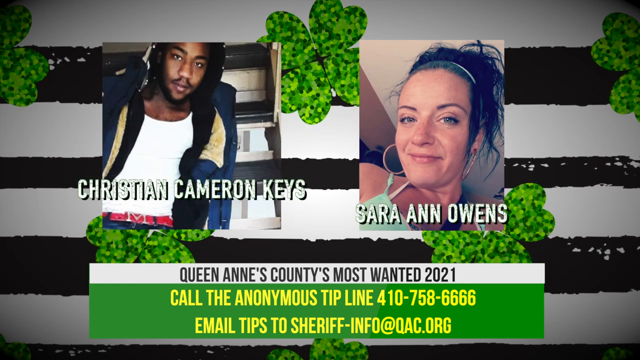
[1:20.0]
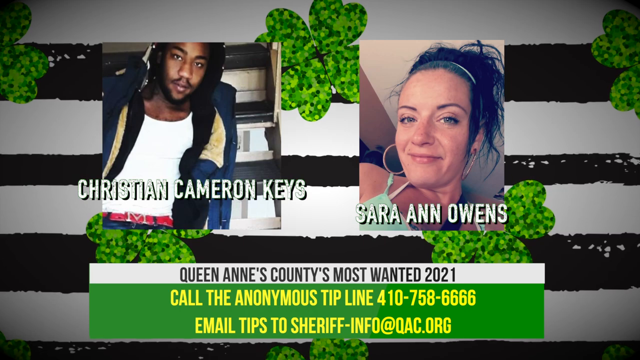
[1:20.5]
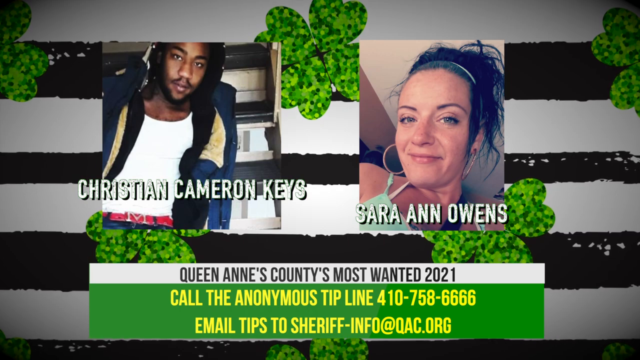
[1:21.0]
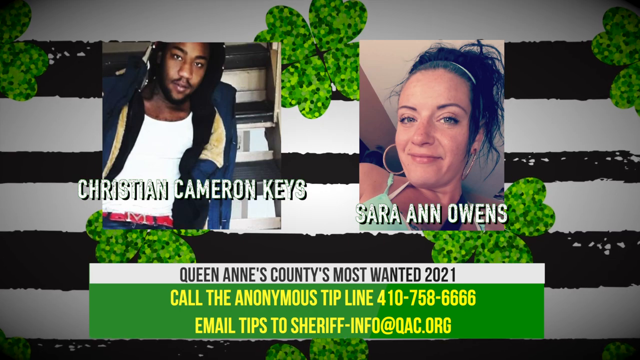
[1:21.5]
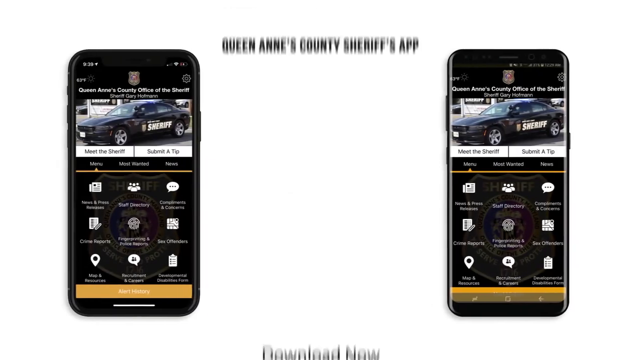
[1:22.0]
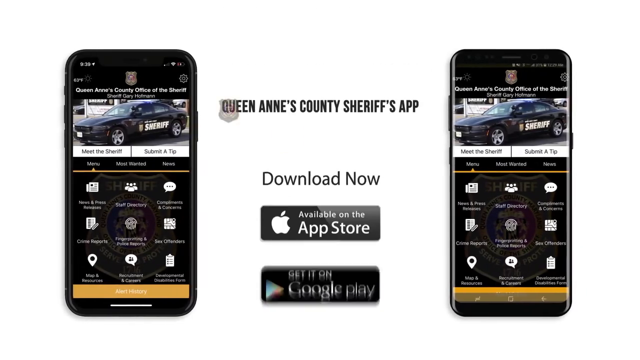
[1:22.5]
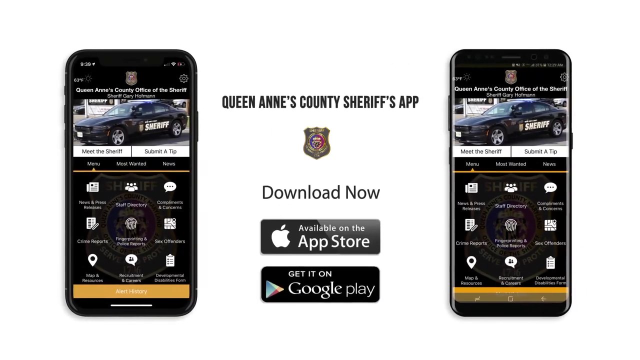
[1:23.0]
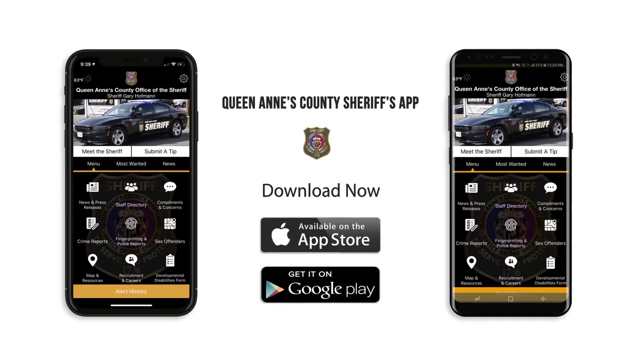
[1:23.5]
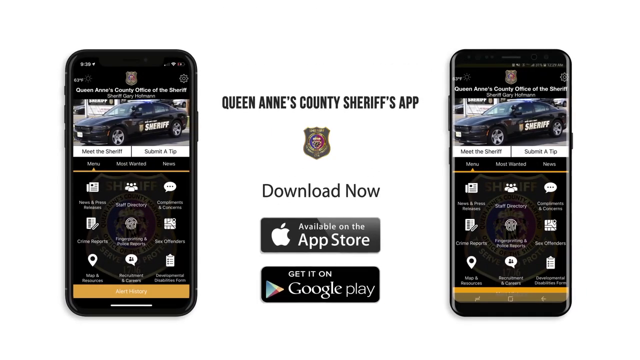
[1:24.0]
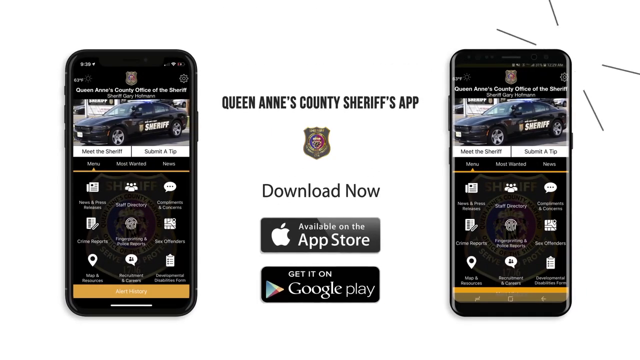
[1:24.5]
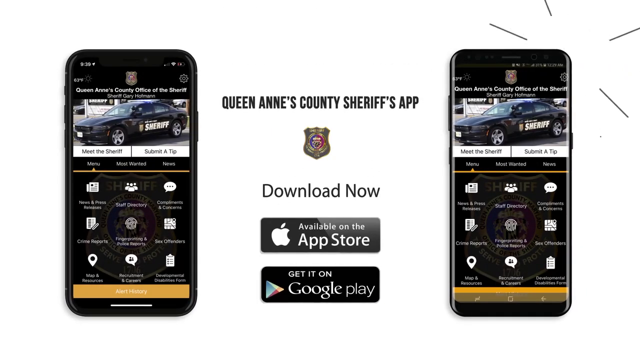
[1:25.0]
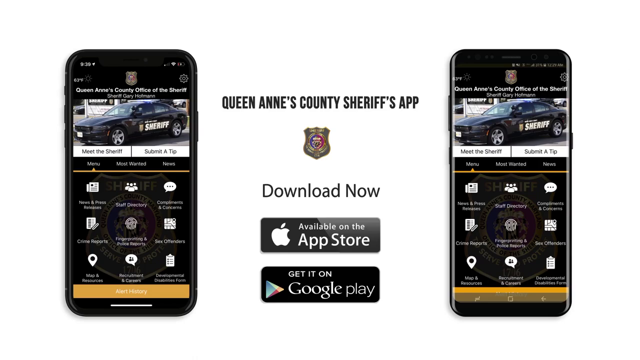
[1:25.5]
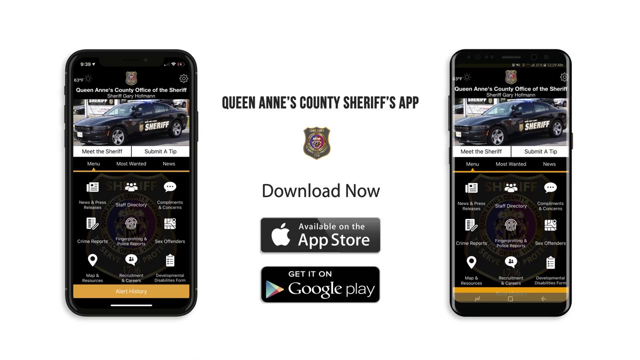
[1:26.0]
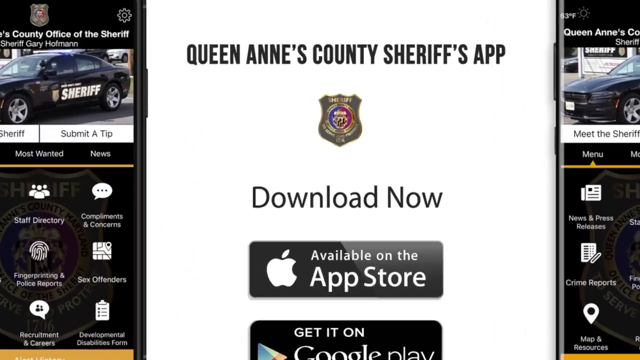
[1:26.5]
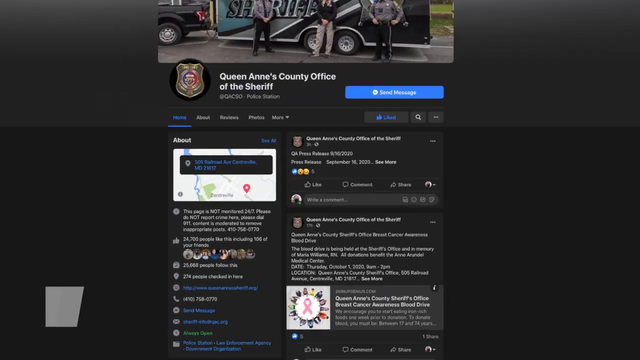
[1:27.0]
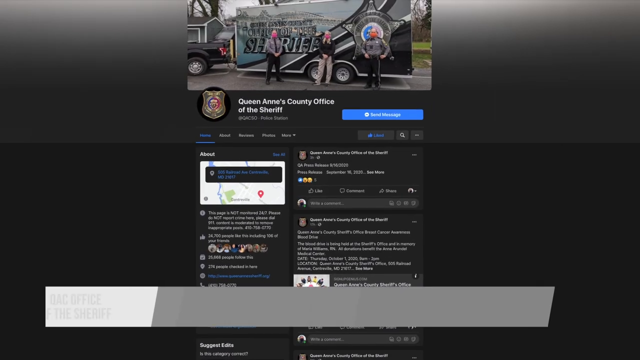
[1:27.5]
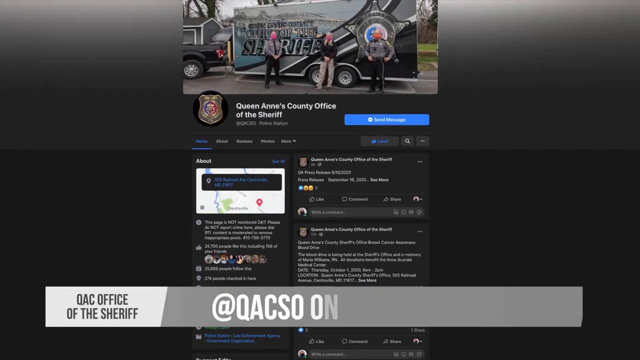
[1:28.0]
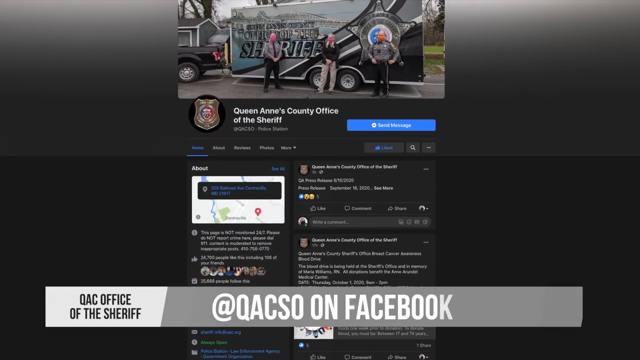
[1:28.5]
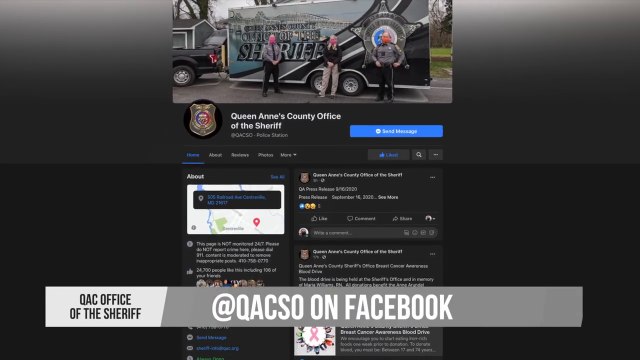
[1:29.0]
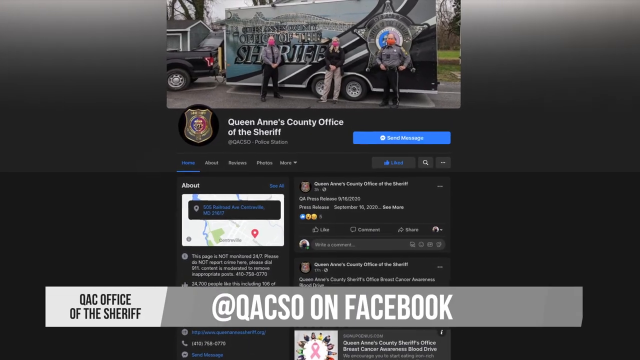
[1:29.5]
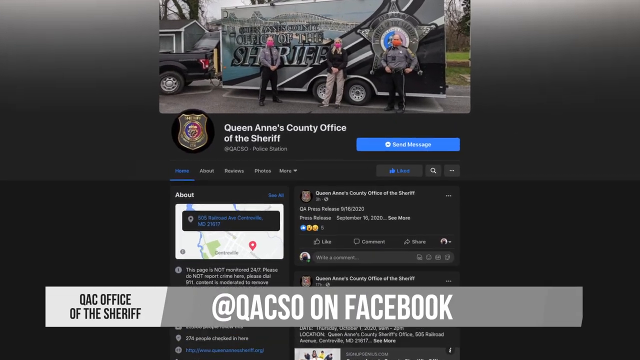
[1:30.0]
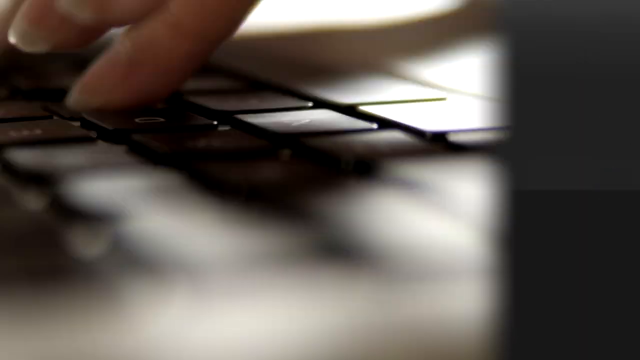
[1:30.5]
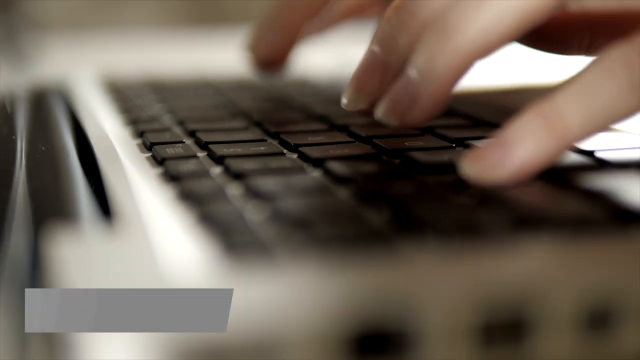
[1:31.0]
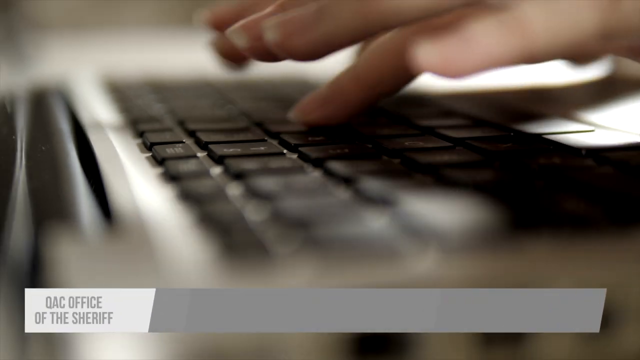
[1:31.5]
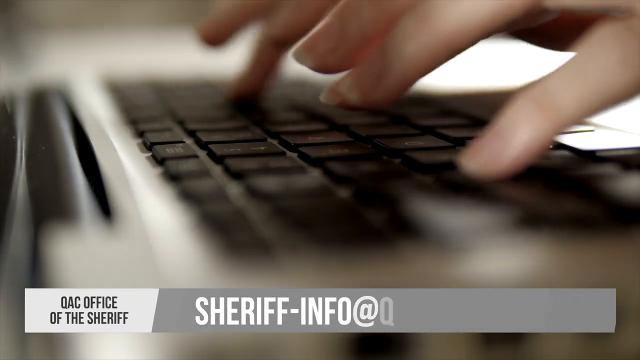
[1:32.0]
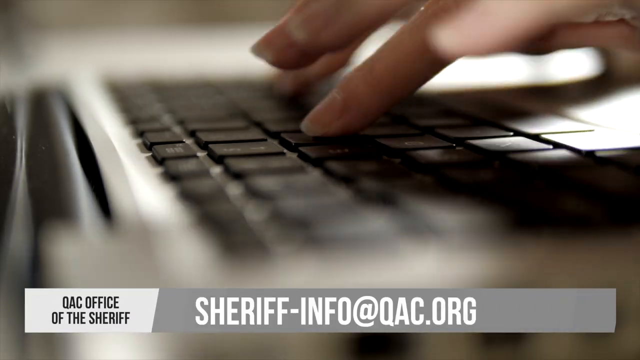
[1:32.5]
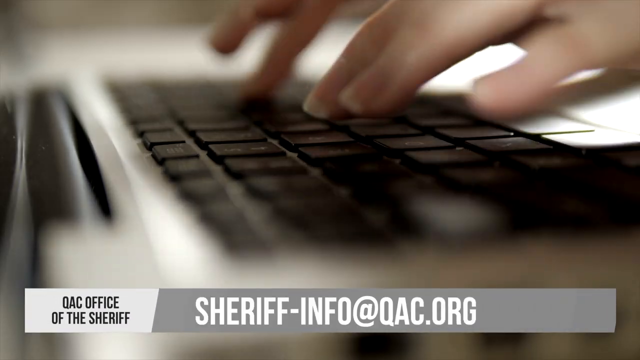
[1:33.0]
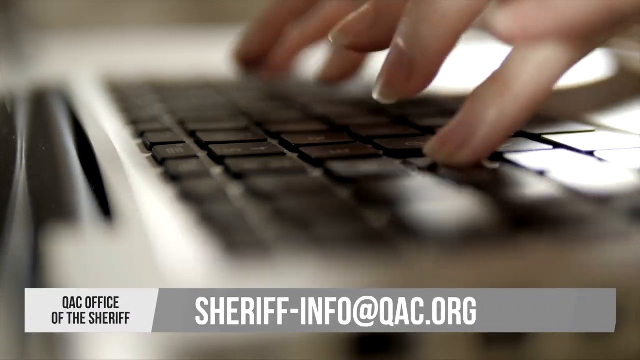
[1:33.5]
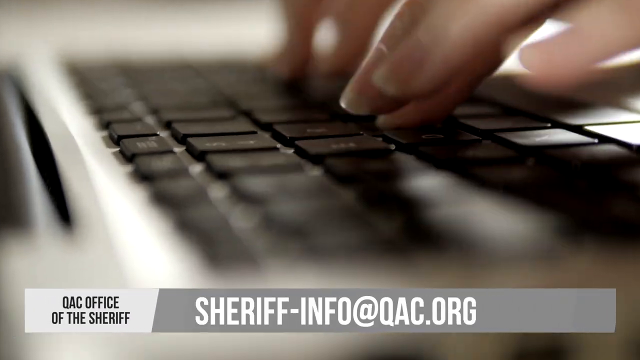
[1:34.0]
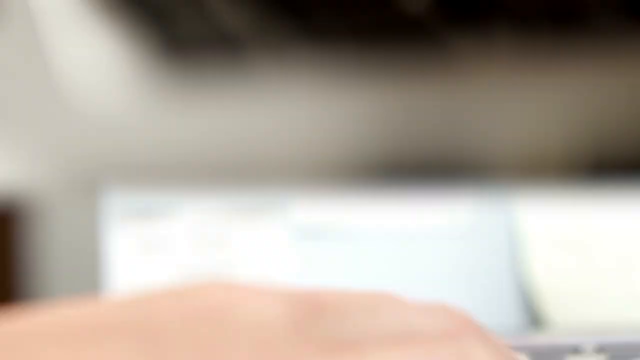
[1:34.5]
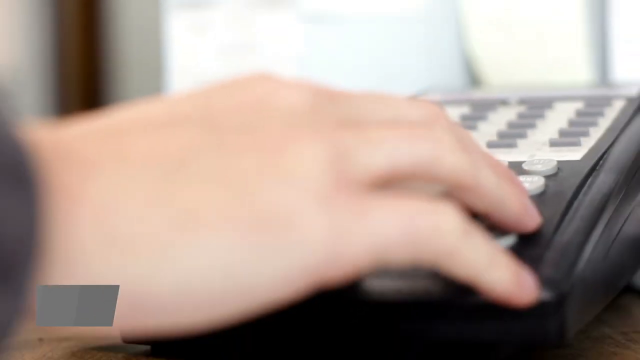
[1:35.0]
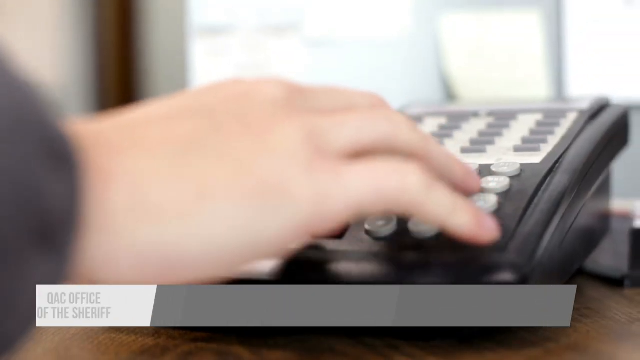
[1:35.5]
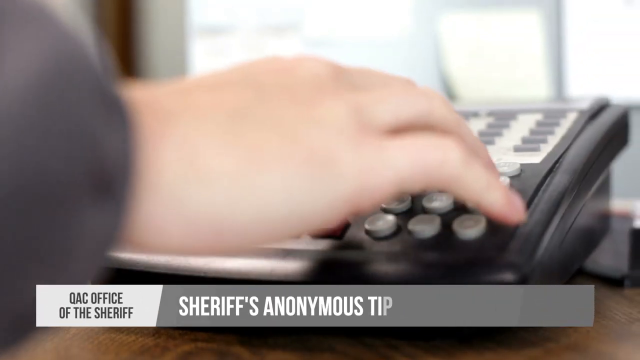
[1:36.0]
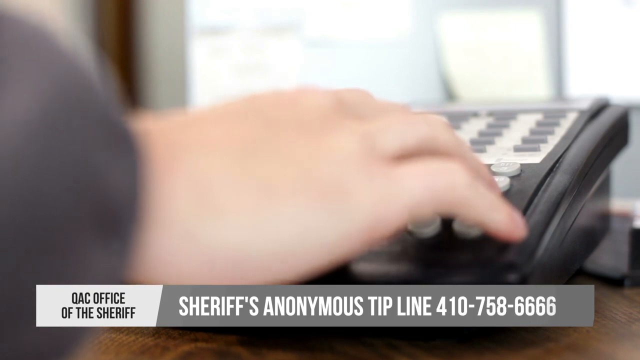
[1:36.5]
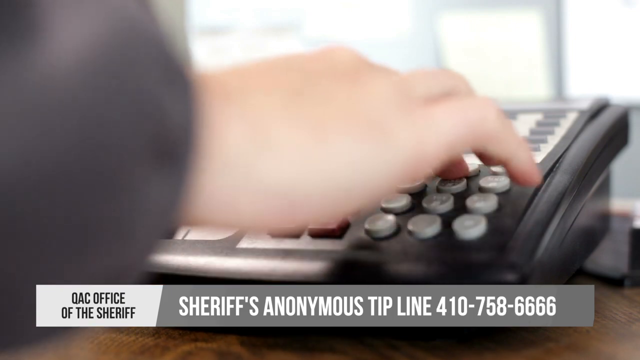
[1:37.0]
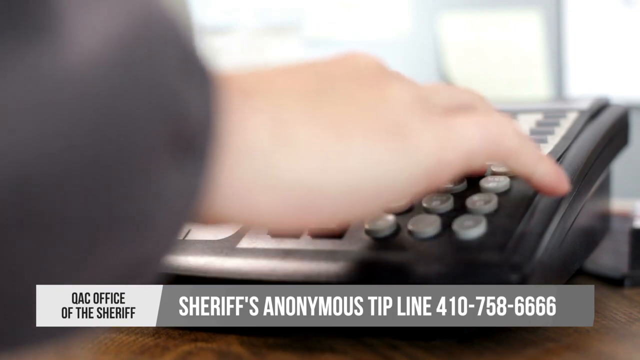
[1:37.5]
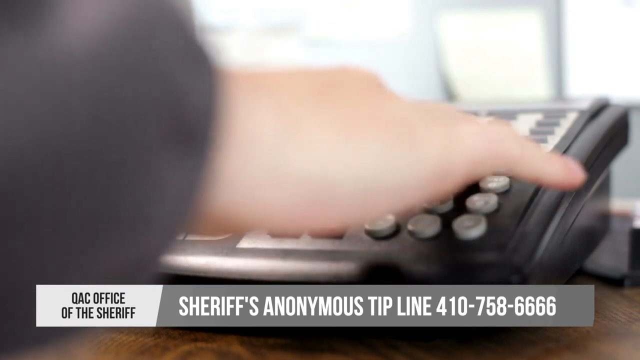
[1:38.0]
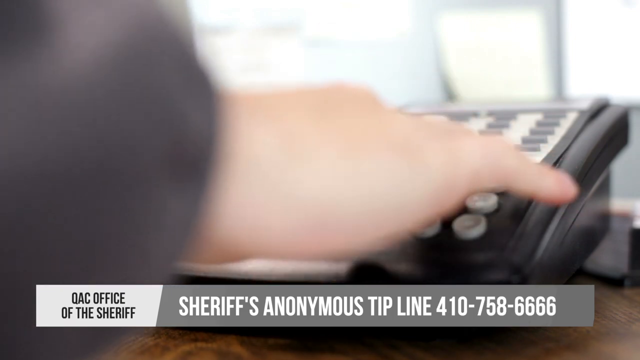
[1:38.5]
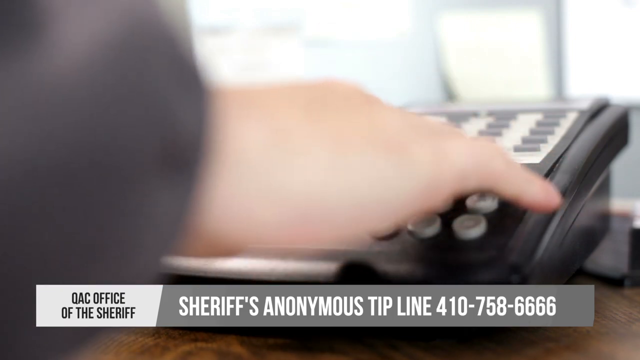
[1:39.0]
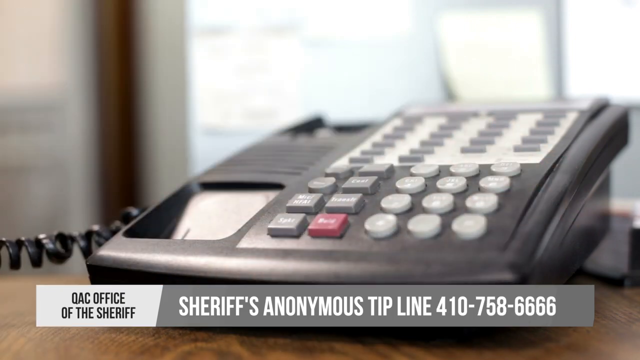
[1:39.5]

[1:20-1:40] Two cell phones are positioned at the far left and far right of the frame against a white background. In the central part are two black text lines with a very small police badge between them. In the lower center of the frame are two rectangular banners containing coloured logos and writing. With a slow zoom, the camera then shows a Facebook page. A very close-up video follows of two hands pressing the keys of a computer keyboard, then another video of a blurry hand pressing gray buttons on a landline phone. Gray and white rectangular banners appear at the bottom of the frame, with black text in the white portion and white text in the gray portion.